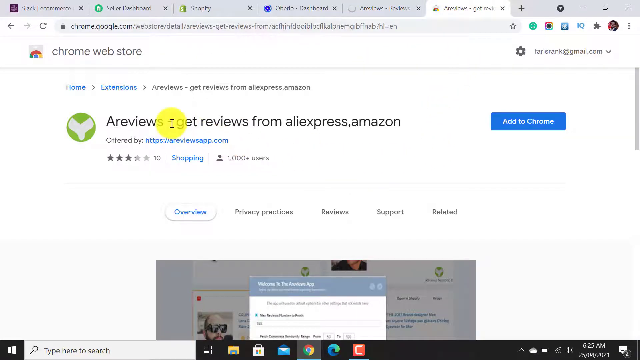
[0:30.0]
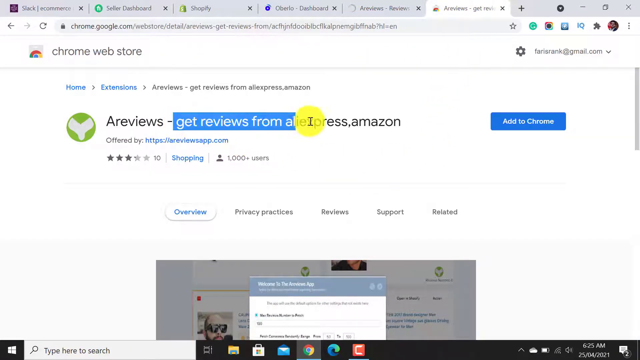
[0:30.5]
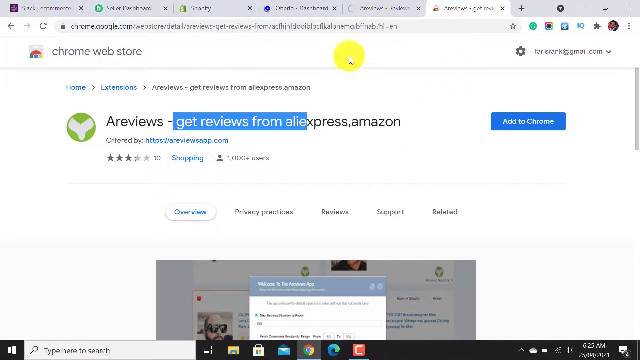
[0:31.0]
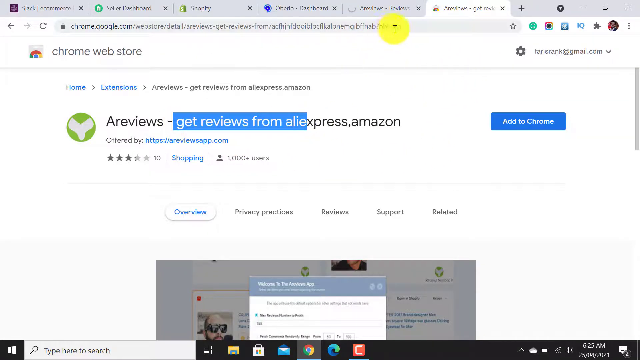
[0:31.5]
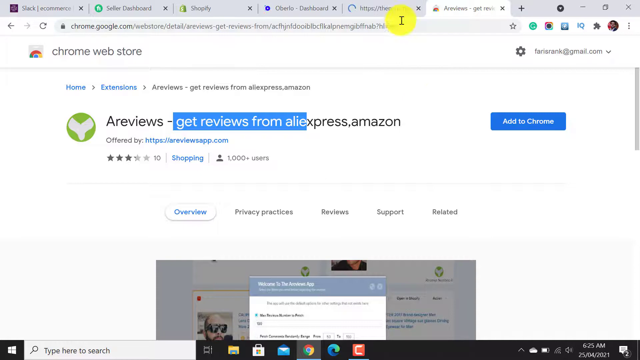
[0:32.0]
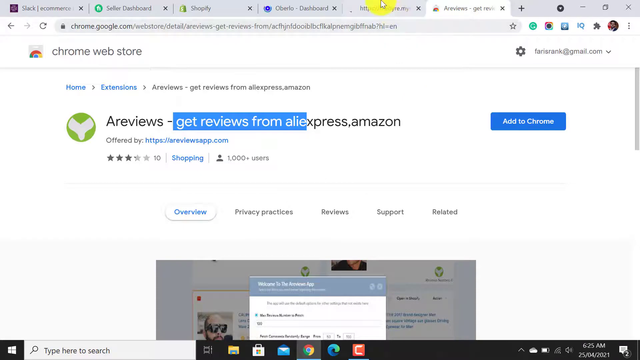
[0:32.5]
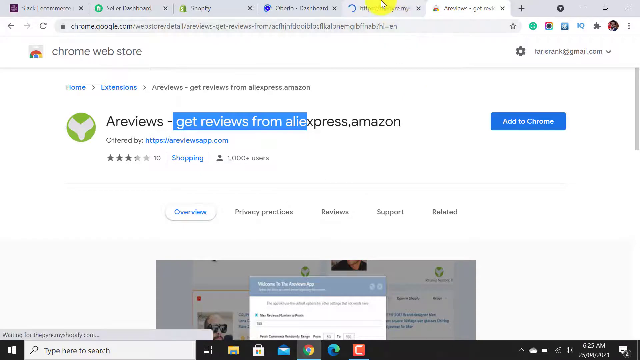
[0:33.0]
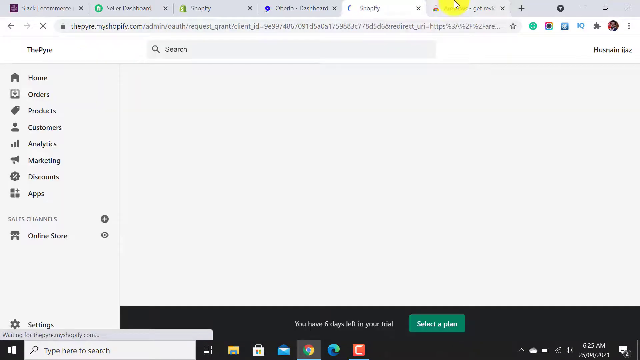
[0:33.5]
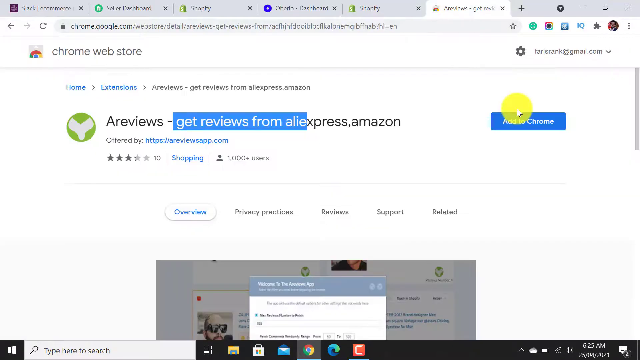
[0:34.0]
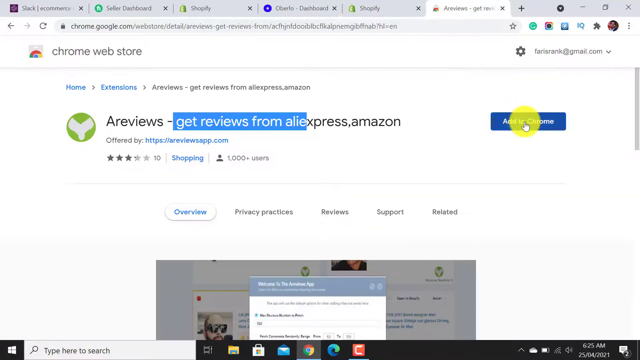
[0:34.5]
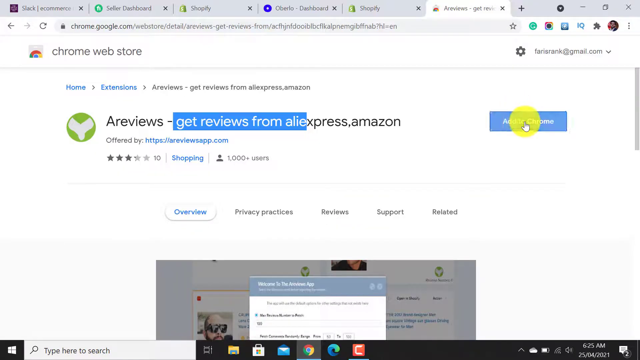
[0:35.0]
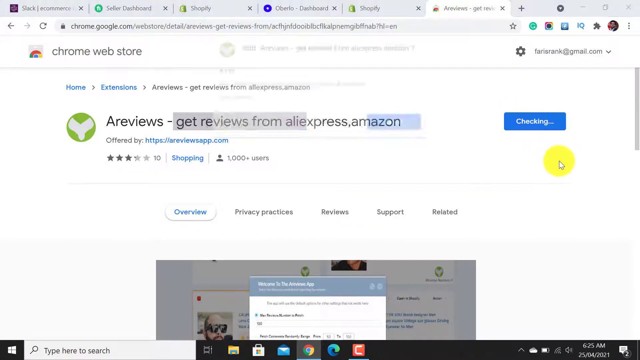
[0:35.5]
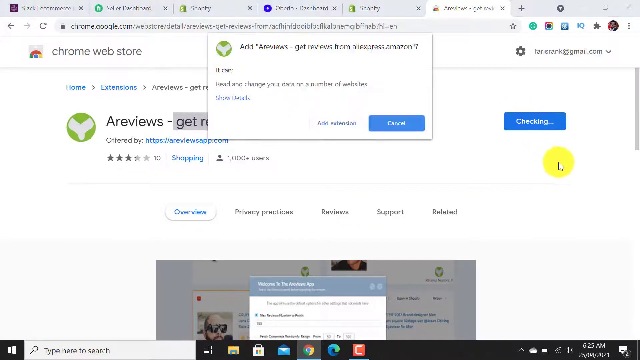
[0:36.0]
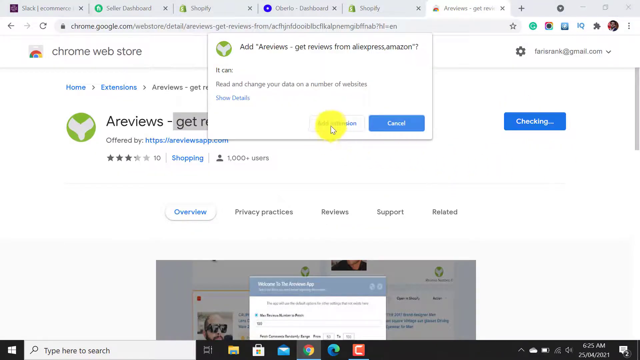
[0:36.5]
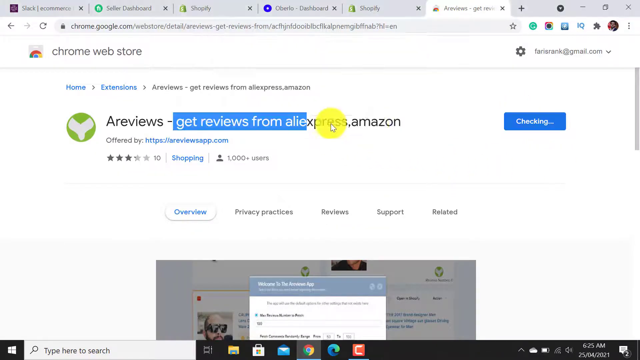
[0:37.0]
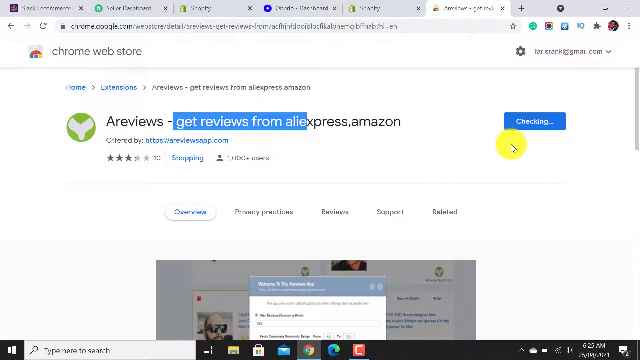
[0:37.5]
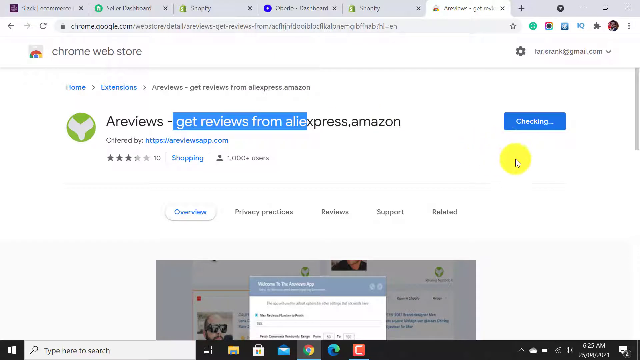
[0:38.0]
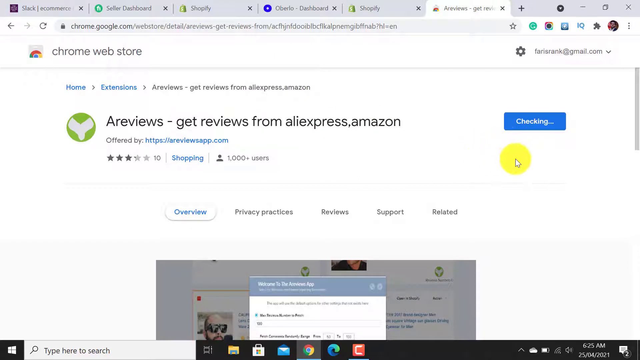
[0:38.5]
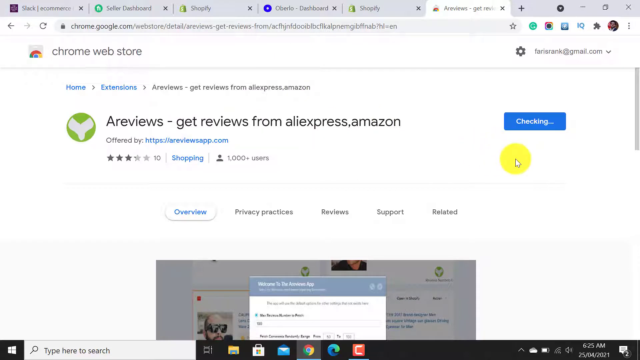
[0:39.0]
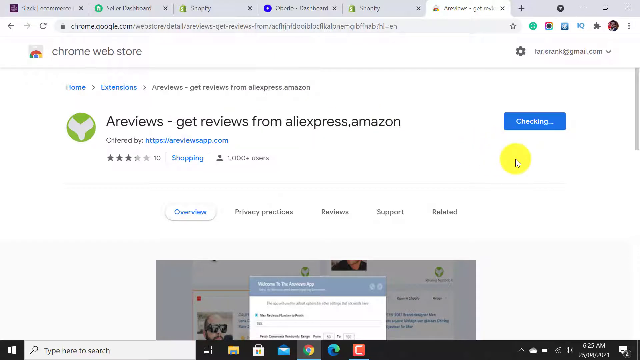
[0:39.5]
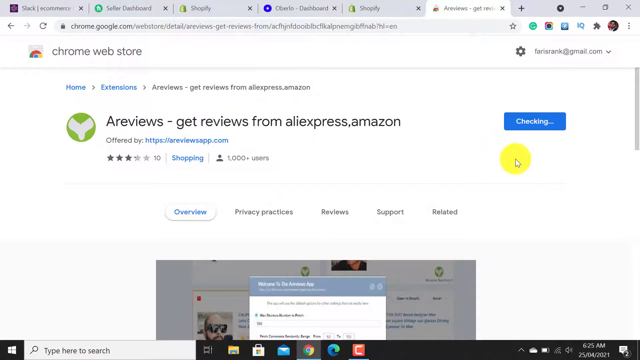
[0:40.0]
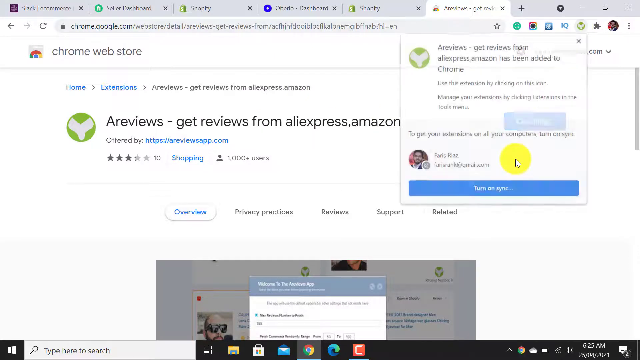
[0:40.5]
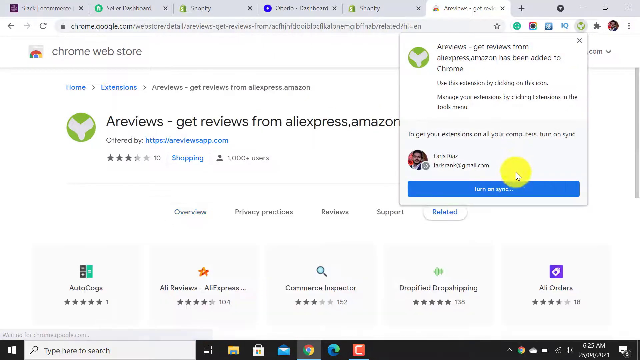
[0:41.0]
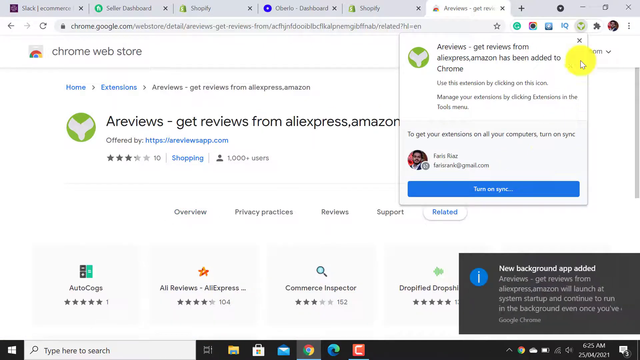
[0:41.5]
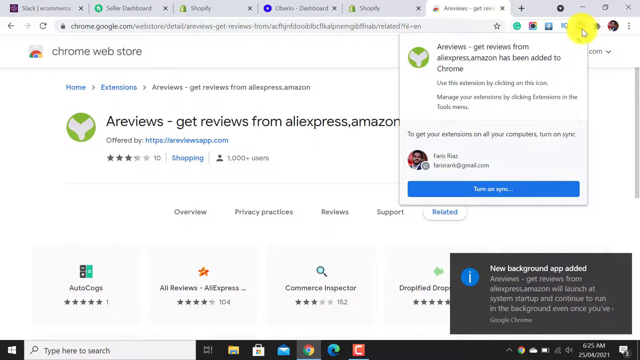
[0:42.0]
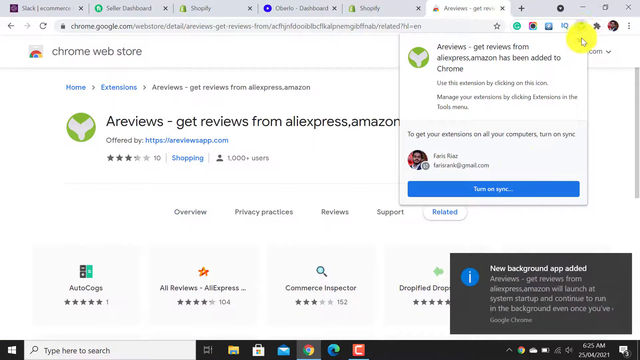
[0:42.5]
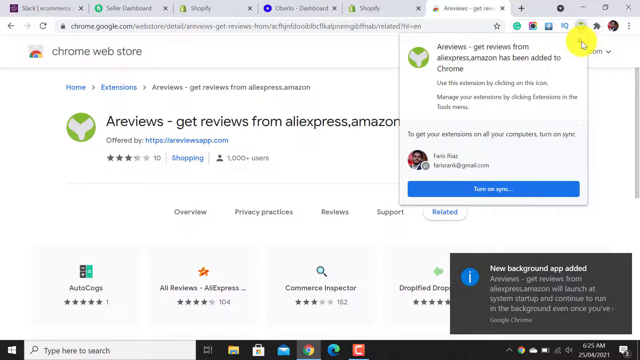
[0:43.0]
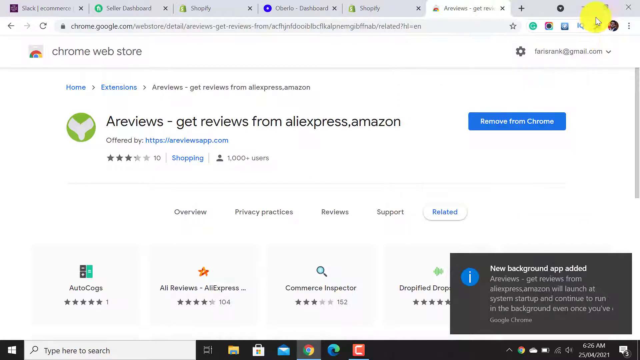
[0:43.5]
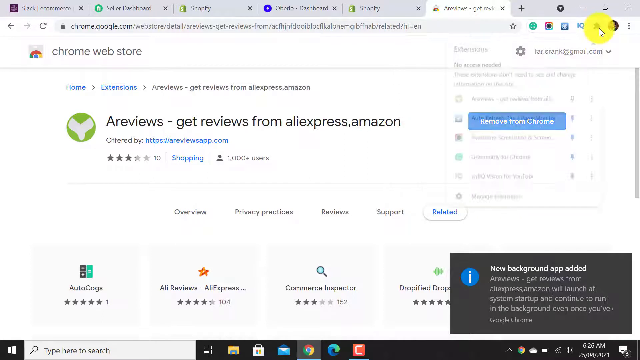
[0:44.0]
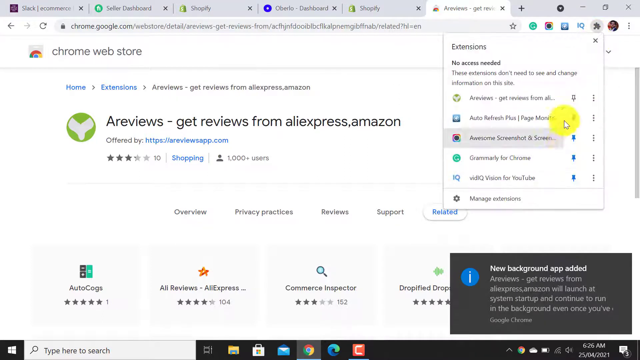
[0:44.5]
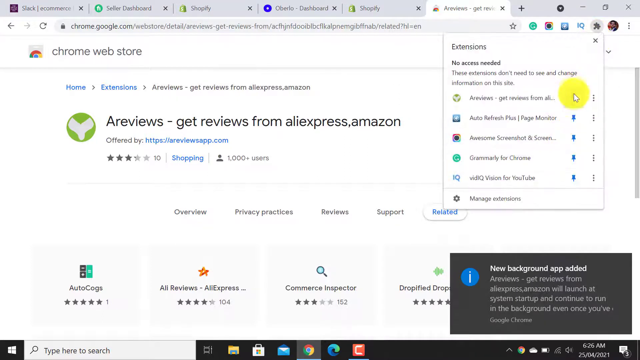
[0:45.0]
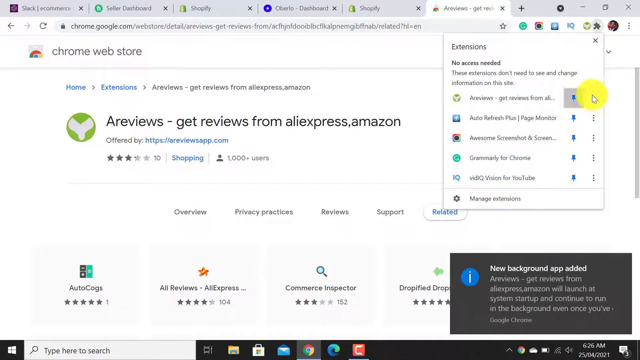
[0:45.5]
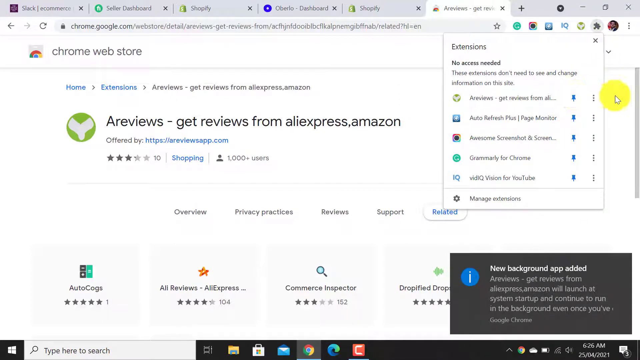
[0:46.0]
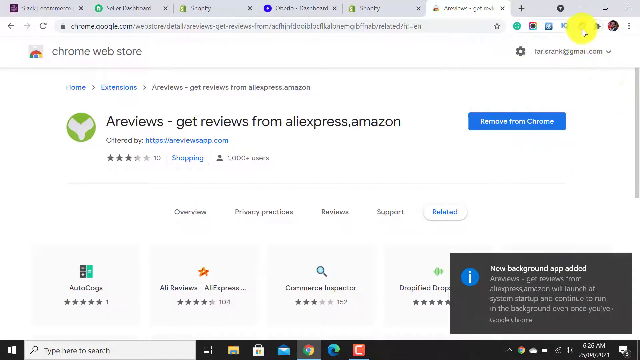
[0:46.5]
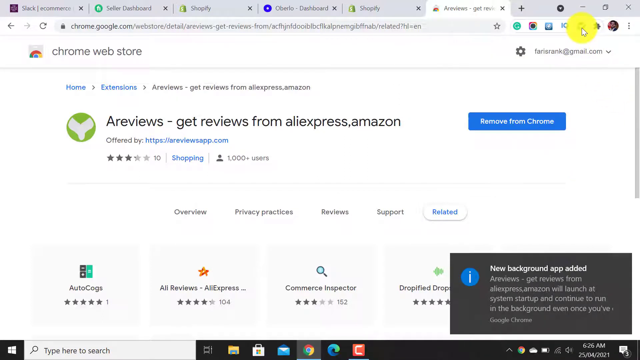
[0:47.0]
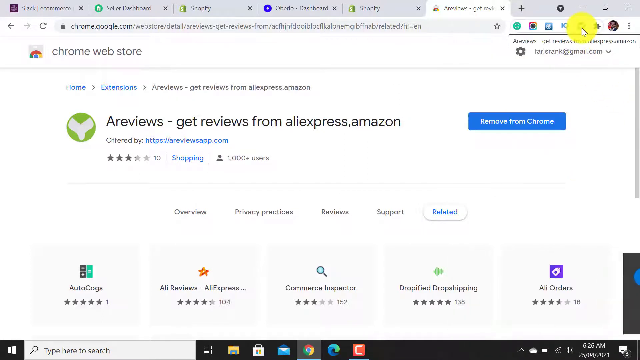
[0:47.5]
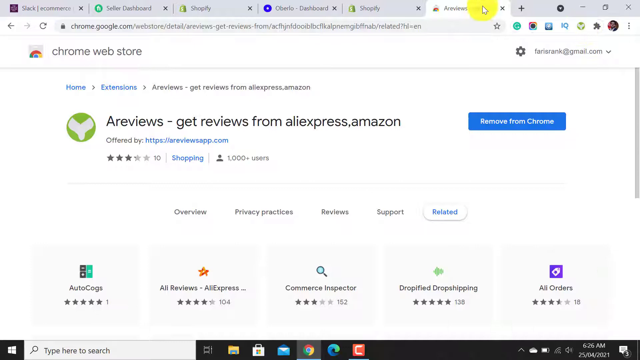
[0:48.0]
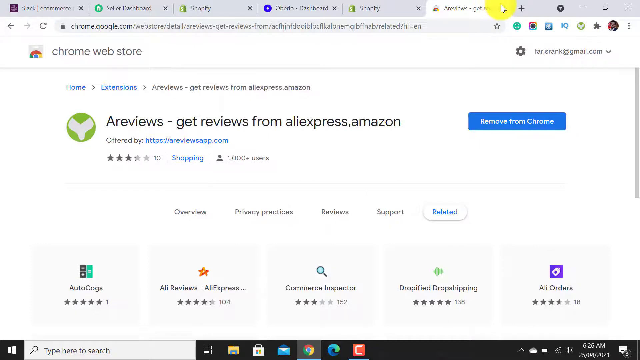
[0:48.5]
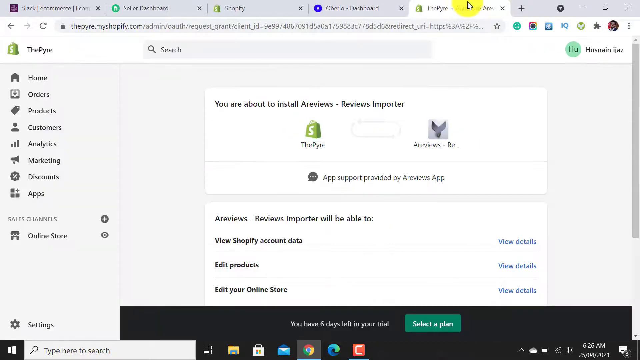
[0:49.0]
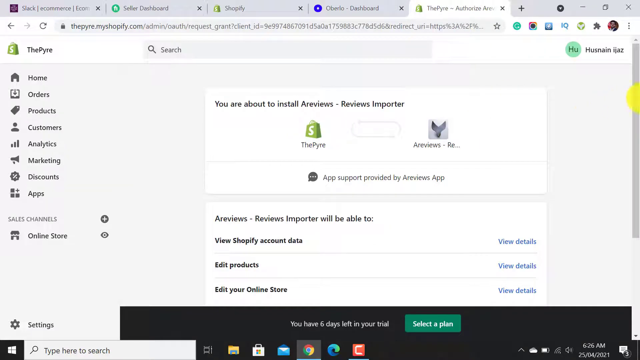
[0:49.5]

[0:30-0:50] The view returns to the earlier screen, where A reviews, "get reviews from AliExpress," is highlighted, and "add to Chrome" is highlighted. A pop-up window appears to add A reviews, "get reviews from AliExpress.Amazon," with the options to add the extension or cancel; add extension is selected. The screen shows "checking." Another pop-up says a new background app has been added: A reviews, get reviews from AliExpress.Amazon, will launch at system startup and continue to run in the background. Another screen describes the extension and confirms it has been added to Chrome, with a note to turn on sync to get extensions on all computers. The computer owner's details are shown. The extensions tool on the page is opened, the extensions drop down, and this extension is pinned. Then the window is closed.